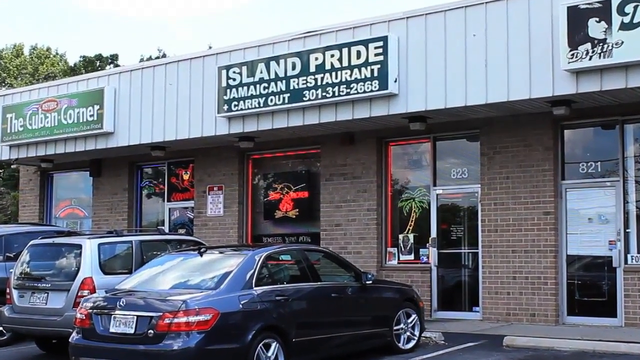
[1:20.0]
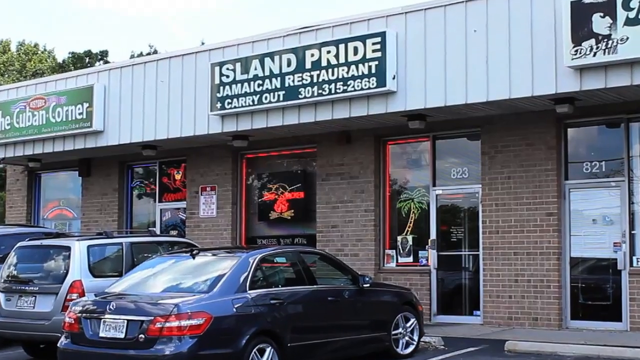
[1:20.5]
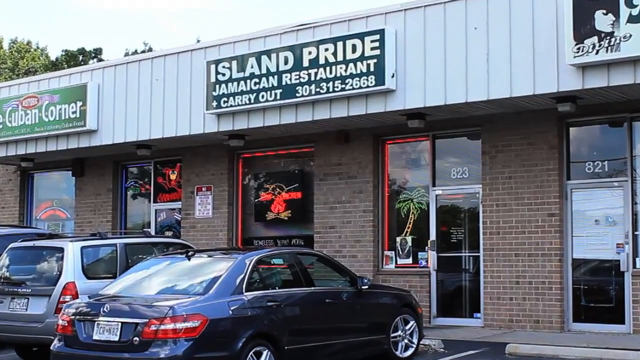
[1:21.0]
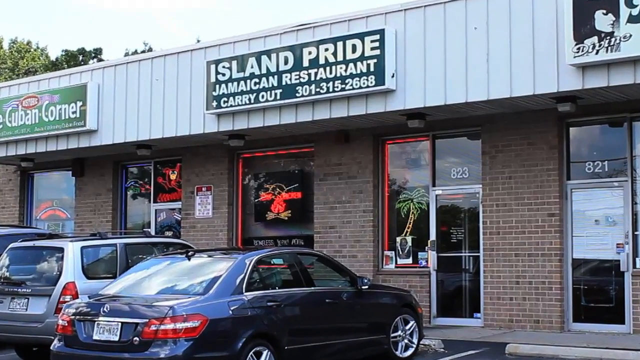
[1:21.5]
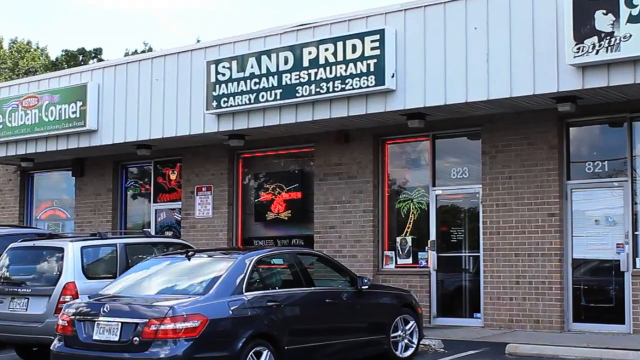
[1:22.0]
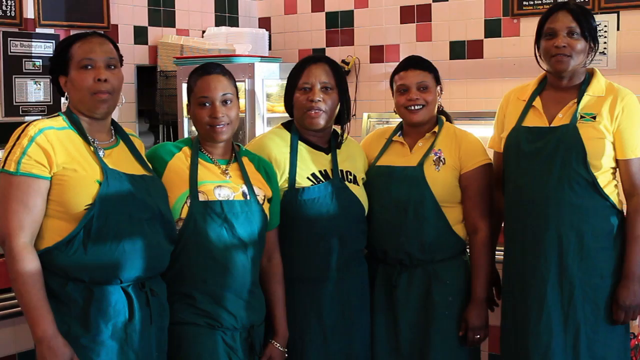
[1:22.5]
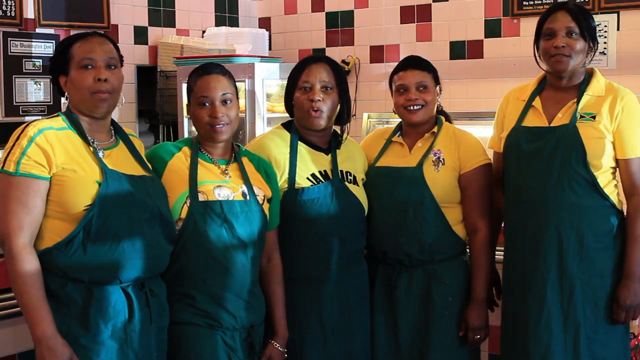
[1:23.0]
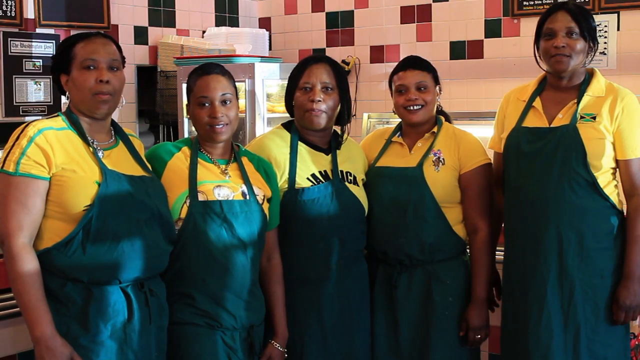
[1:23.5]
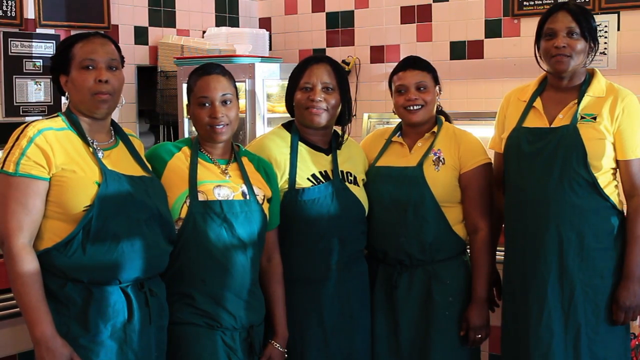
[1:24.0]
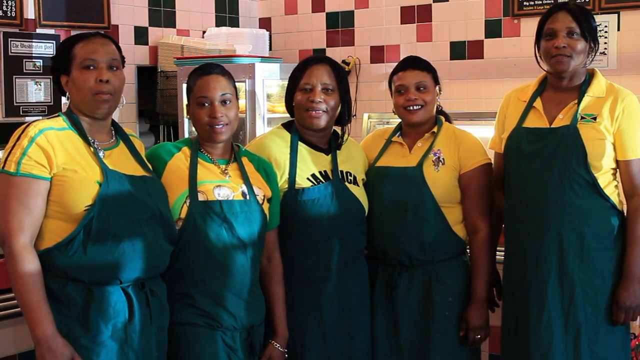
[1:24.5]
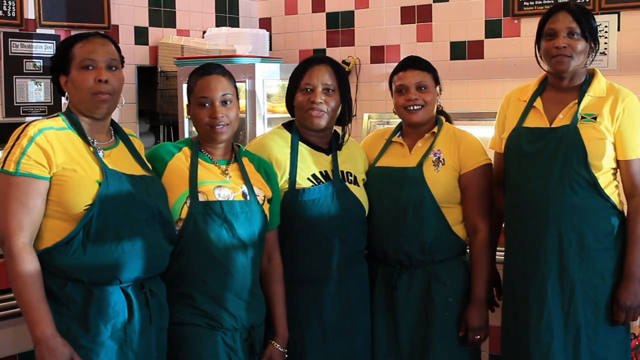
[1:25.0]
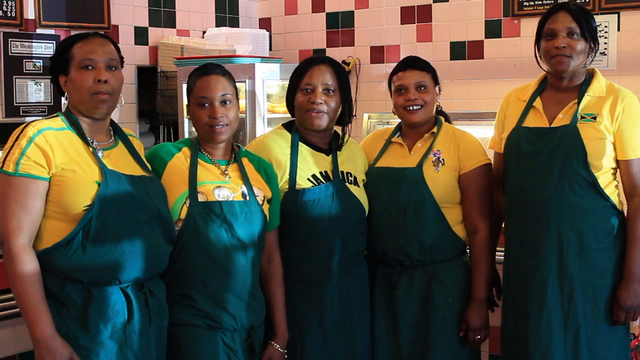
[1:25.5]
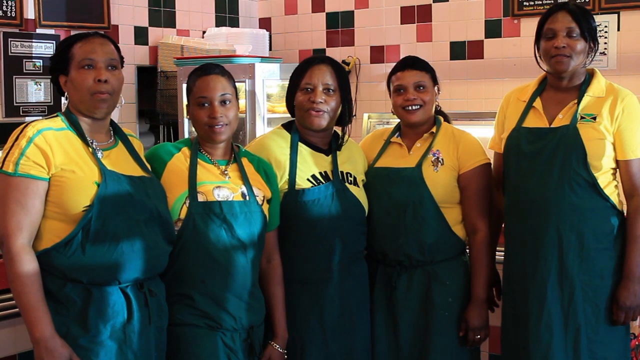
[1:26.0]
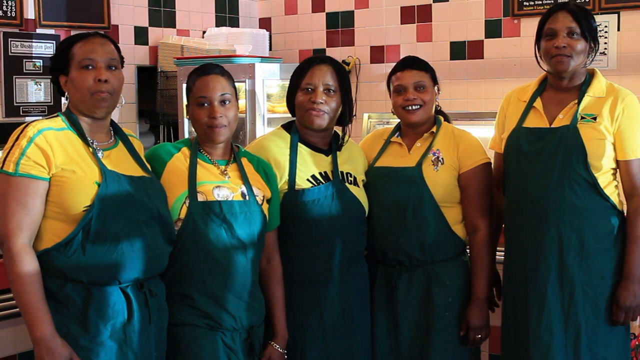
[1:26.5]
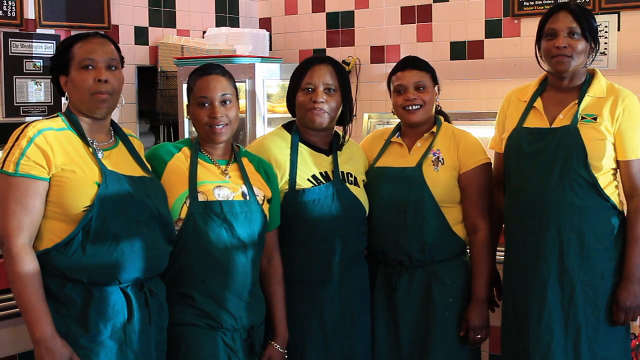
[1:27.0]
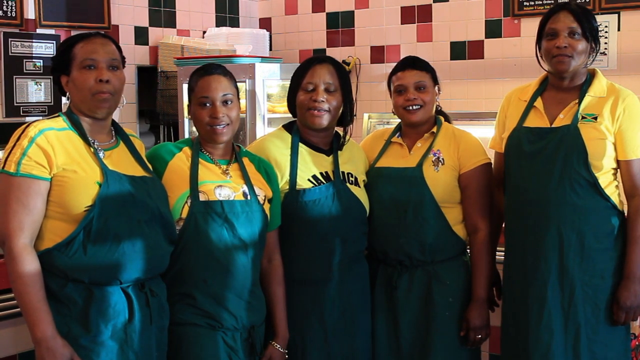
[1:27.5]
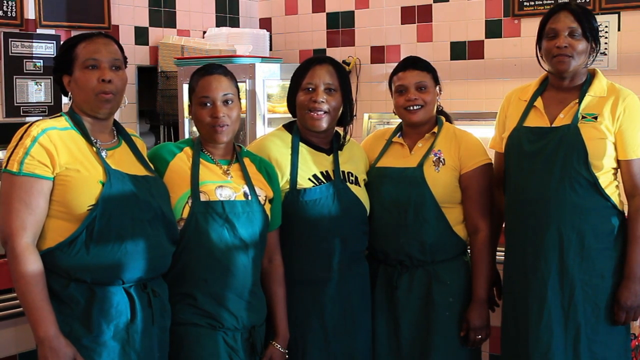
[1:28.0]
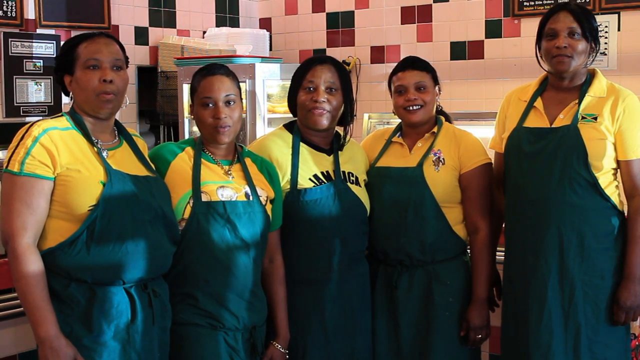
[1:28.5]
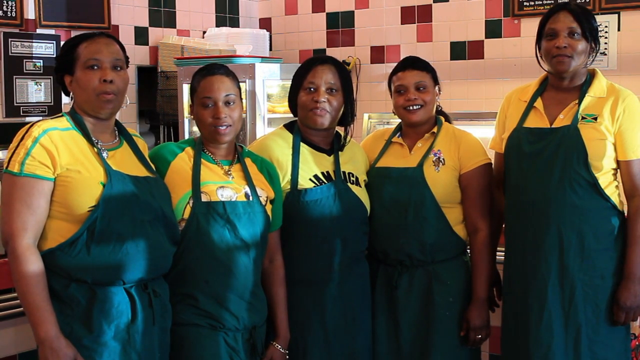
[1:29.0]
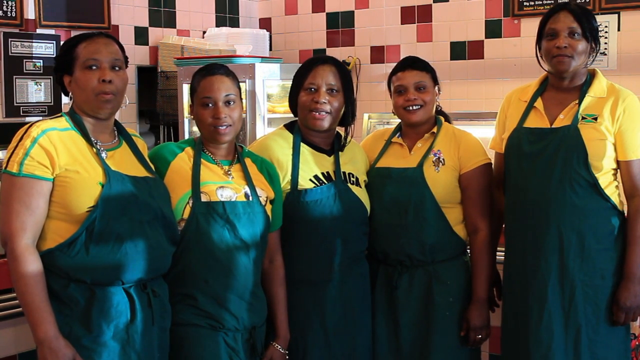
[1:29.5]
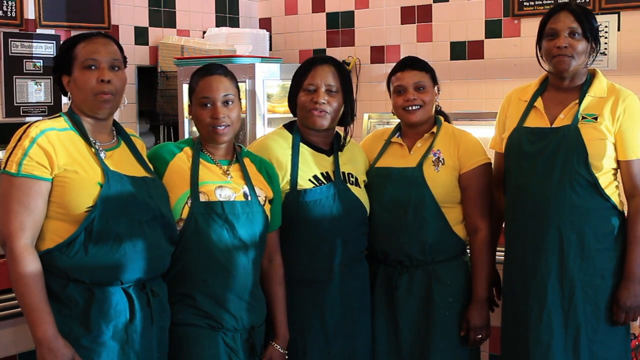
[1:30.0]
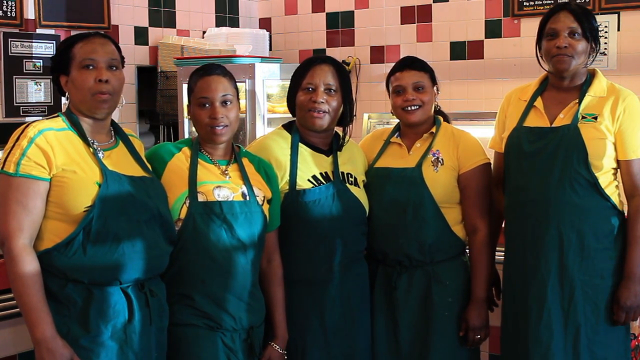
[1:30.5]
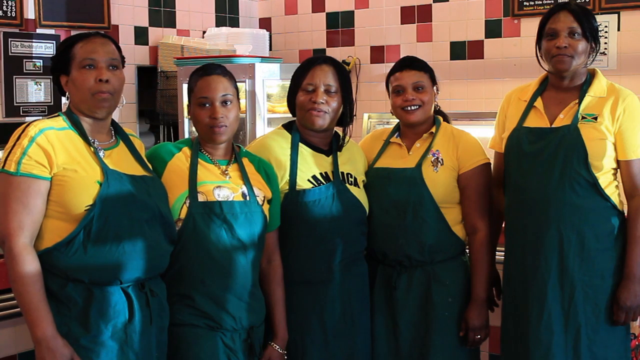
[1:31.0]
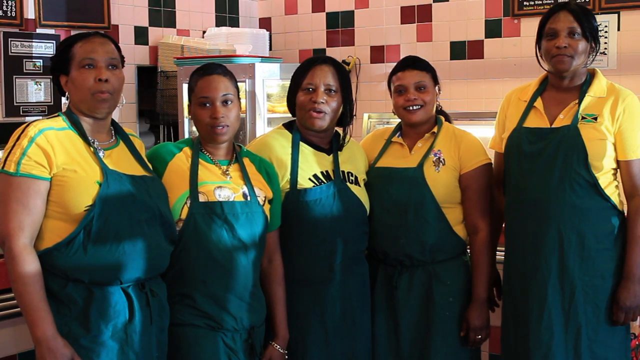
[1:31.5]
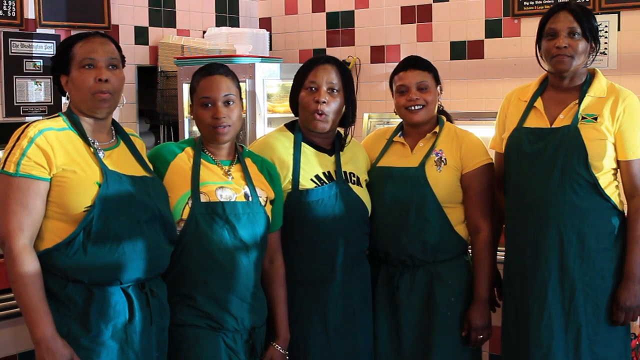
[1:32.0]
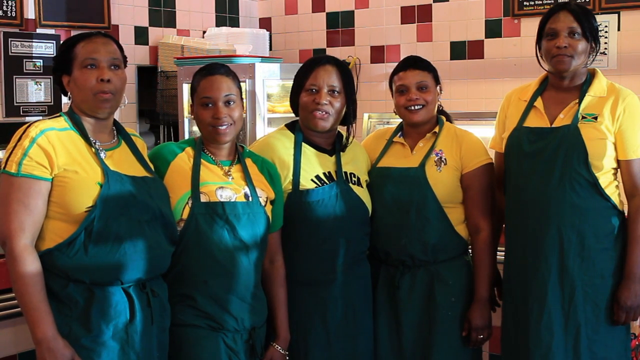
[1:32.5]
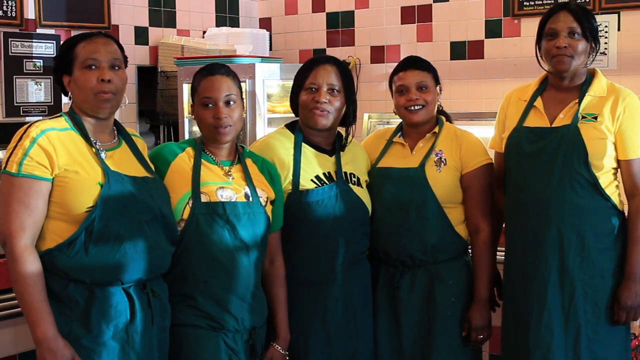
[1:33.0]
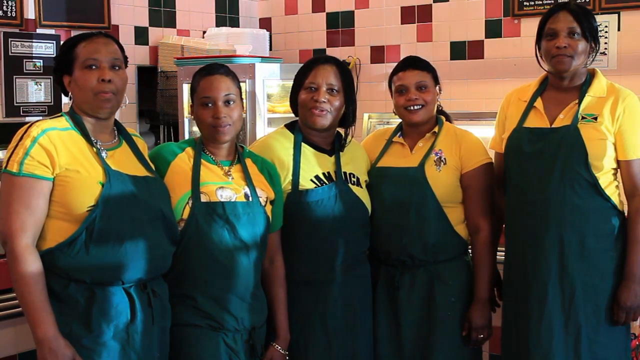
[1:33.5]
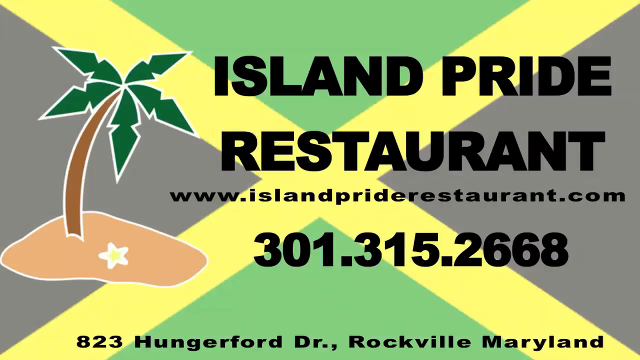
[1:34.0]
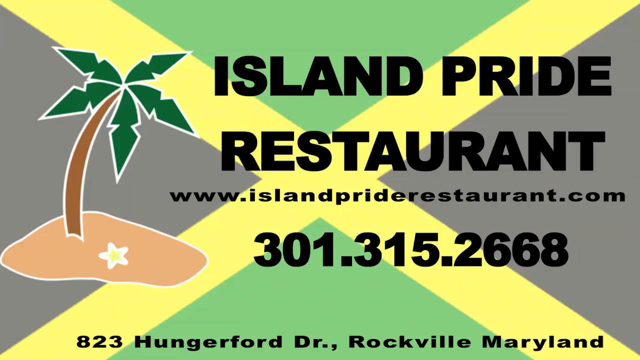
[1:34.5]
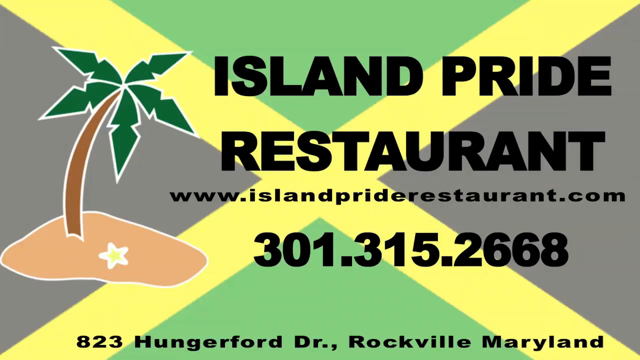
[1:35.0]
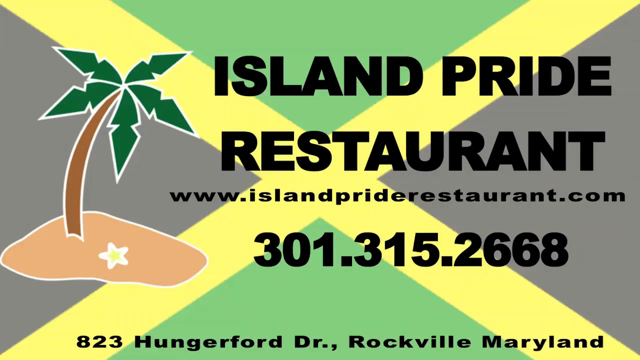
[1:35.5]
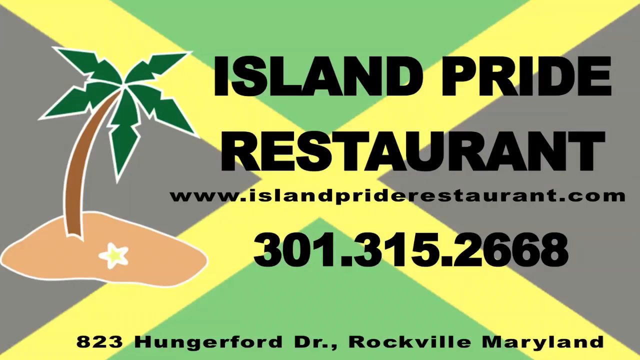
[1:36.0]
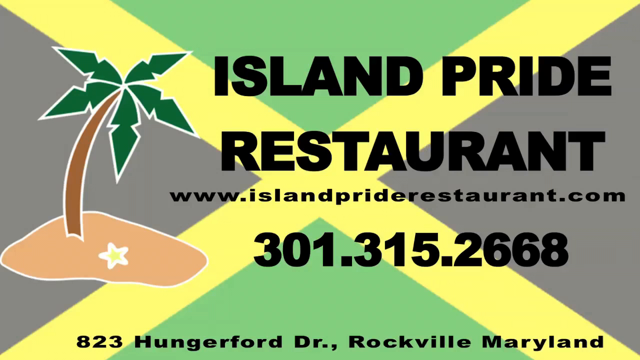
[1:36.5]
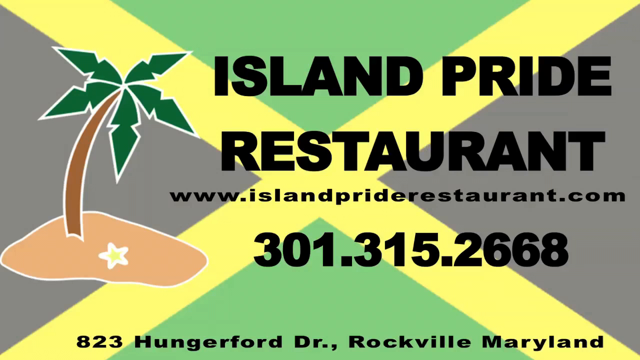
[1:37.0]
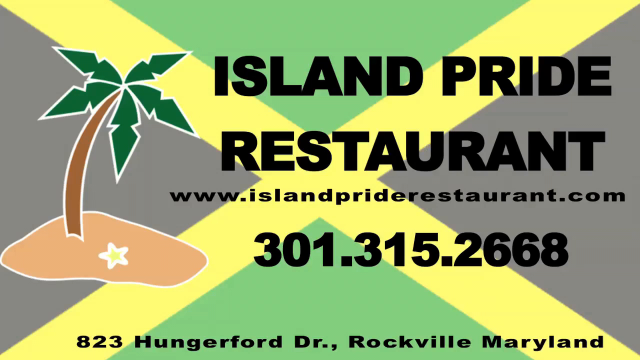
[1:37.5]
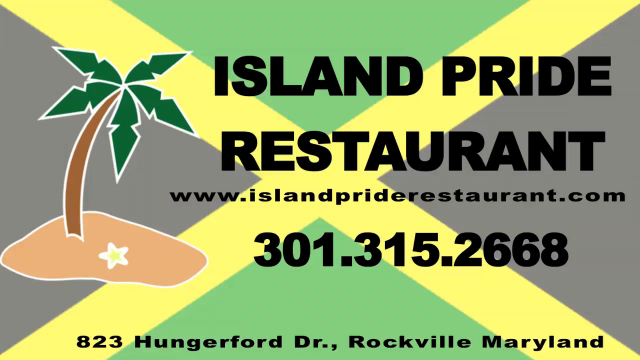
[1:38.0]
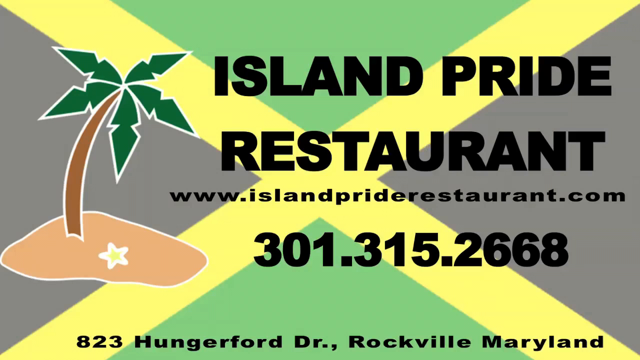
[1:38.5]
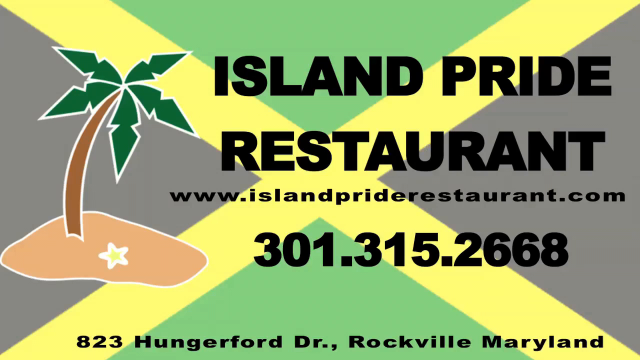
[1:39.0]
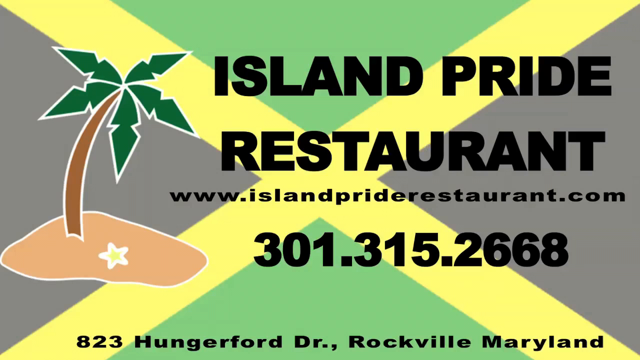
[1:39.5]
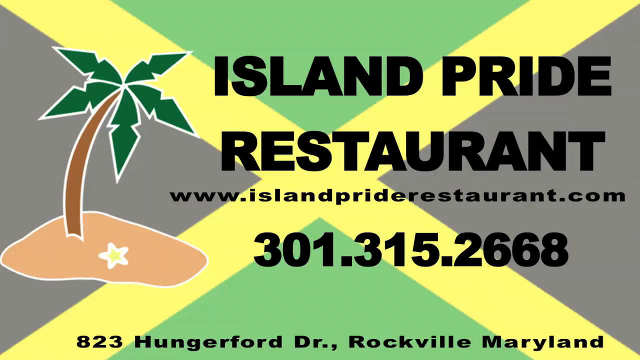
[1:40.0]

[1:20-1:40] The camera goes back to the women shown at the start. They wear gowns and work shirts; some have button-up shirts and some have regular shirts. They all seem to be Jamaican, so the video was possibly filmed in Jamaica. At the end, text reads "Island Pride restaurant," "www.islandpriderestaurant.com" and the phone number "0 1 3 1 5 3 2 6 6 8."